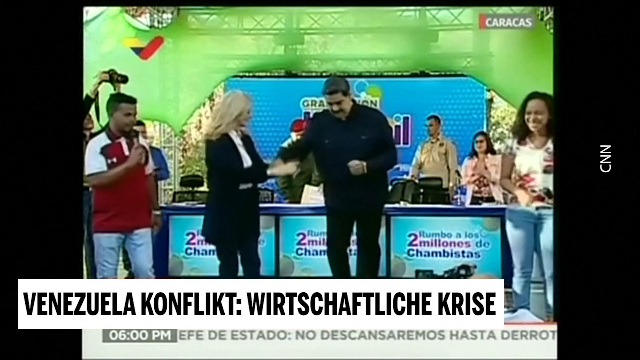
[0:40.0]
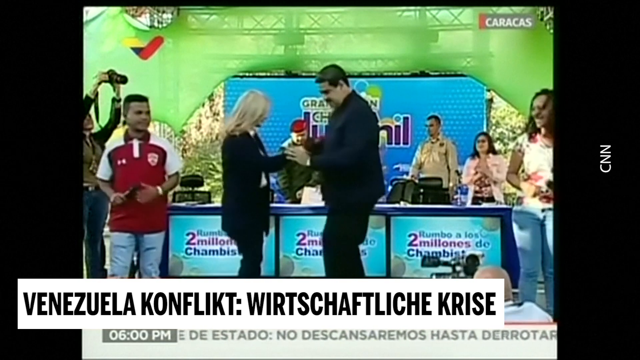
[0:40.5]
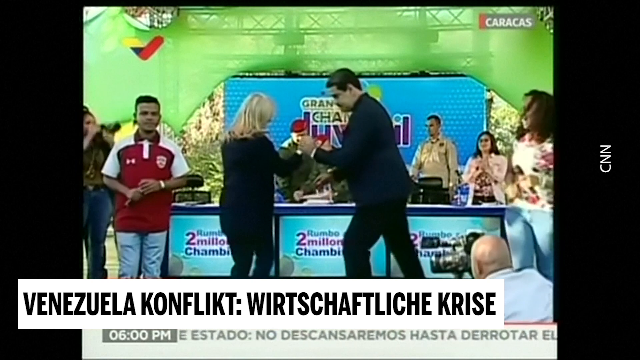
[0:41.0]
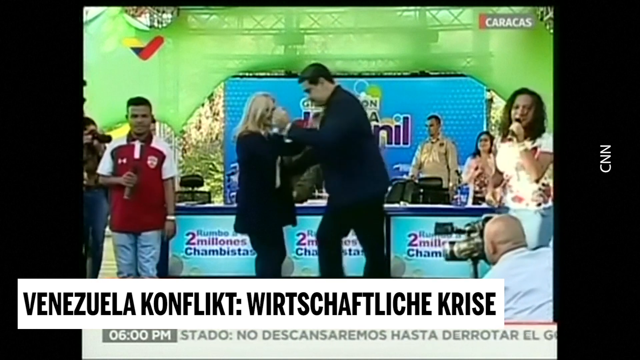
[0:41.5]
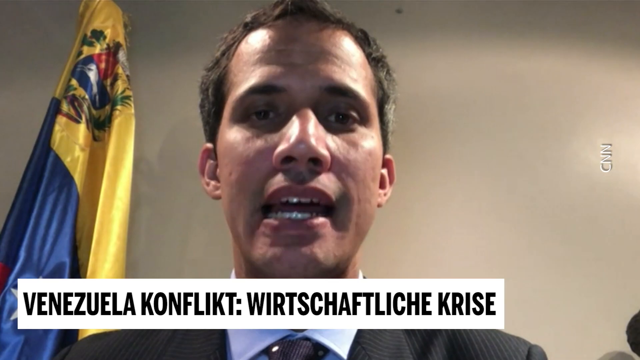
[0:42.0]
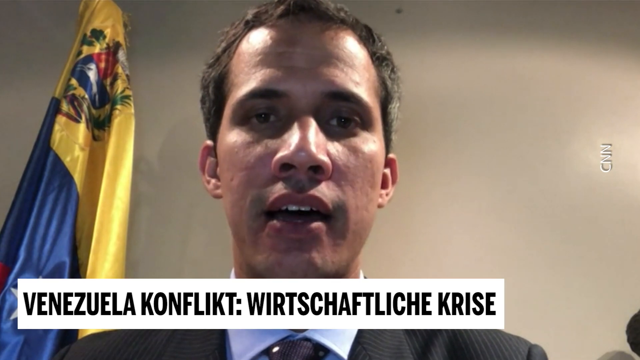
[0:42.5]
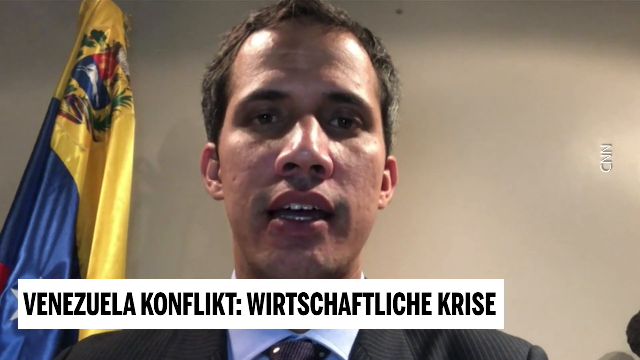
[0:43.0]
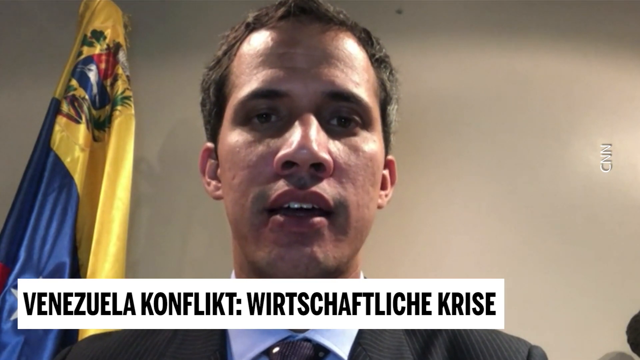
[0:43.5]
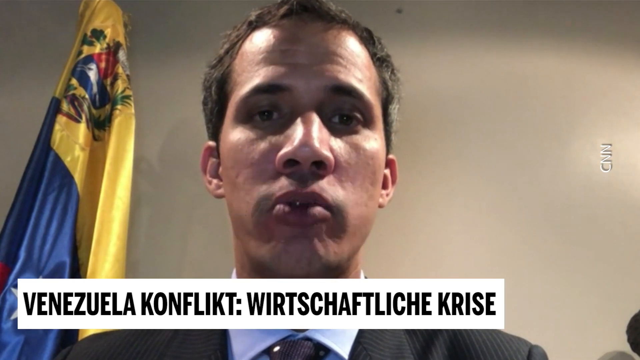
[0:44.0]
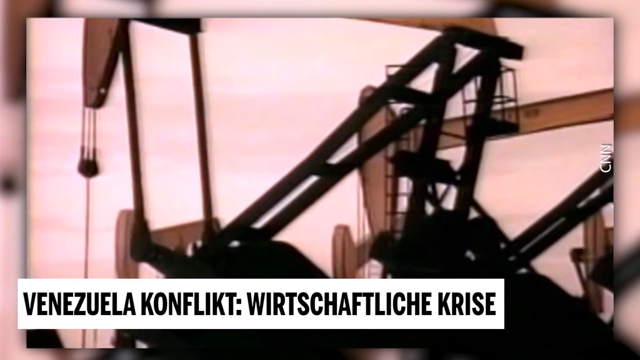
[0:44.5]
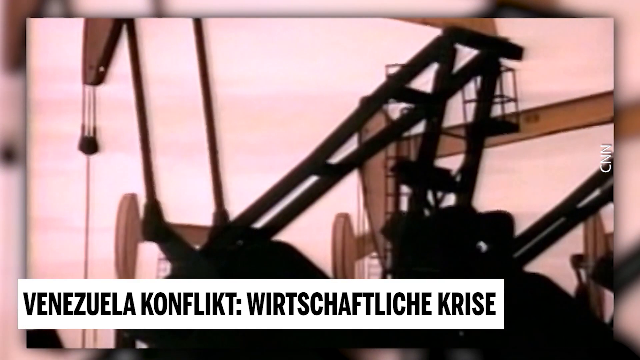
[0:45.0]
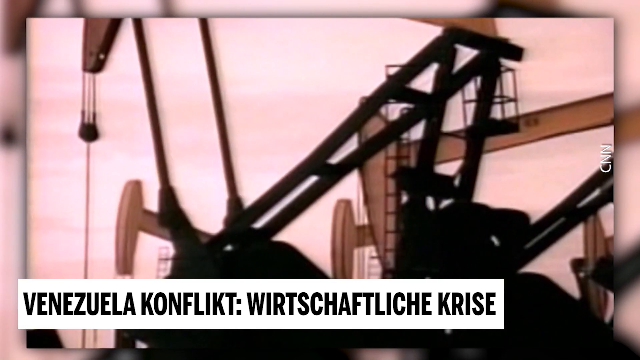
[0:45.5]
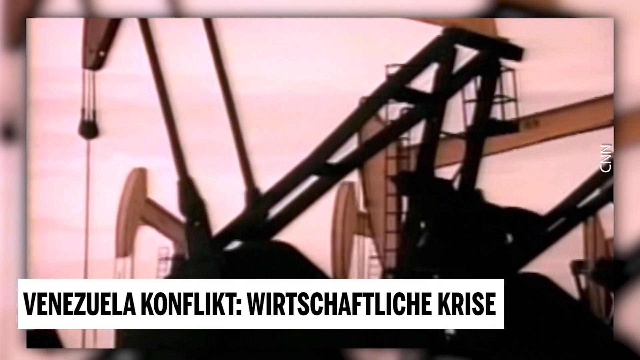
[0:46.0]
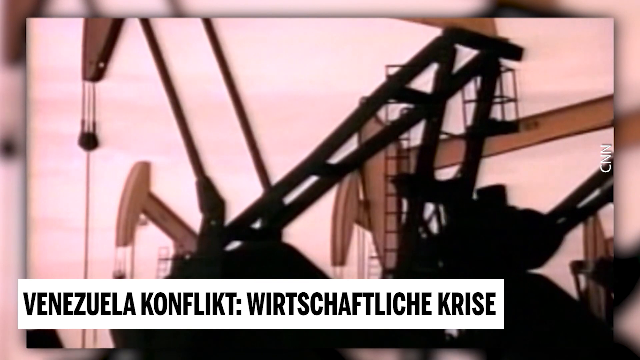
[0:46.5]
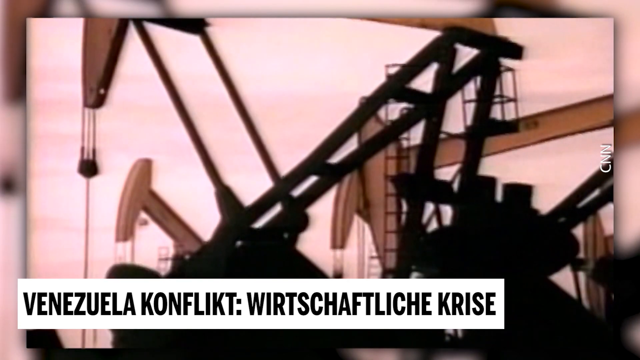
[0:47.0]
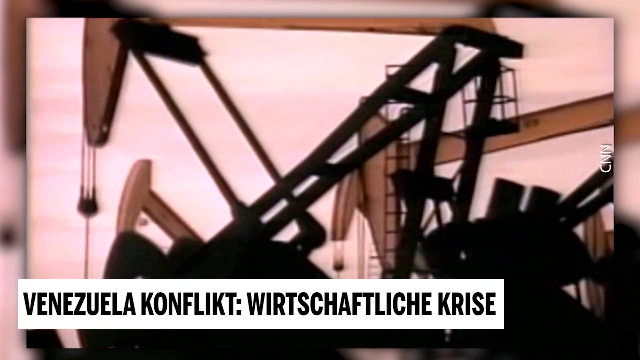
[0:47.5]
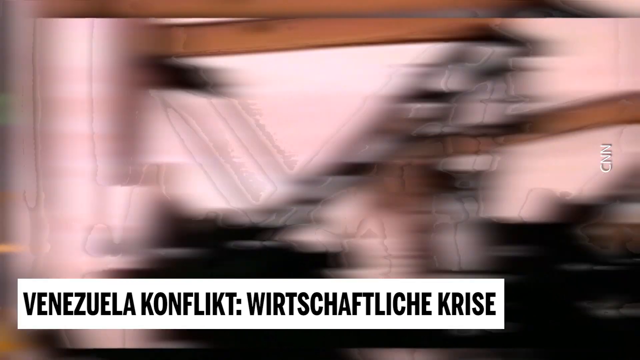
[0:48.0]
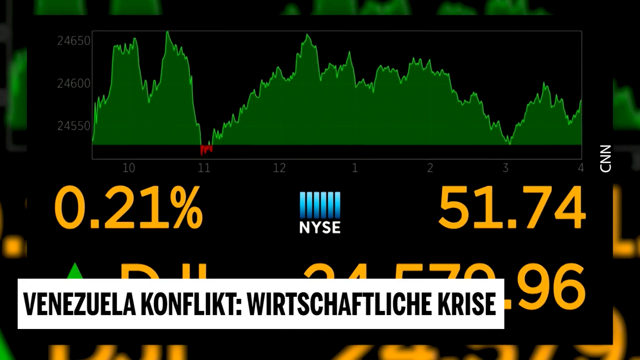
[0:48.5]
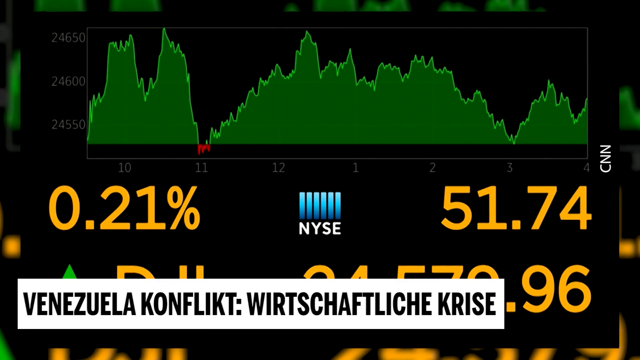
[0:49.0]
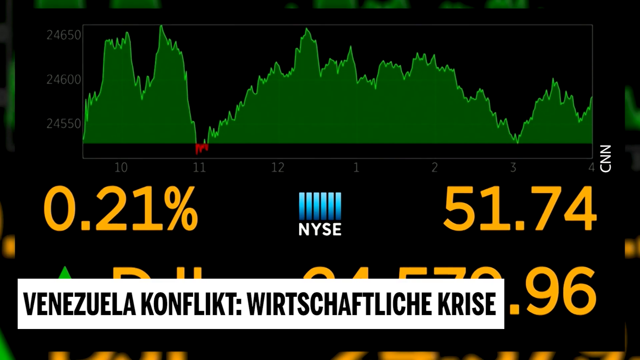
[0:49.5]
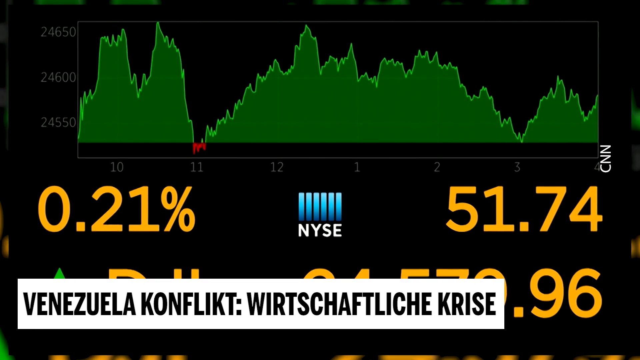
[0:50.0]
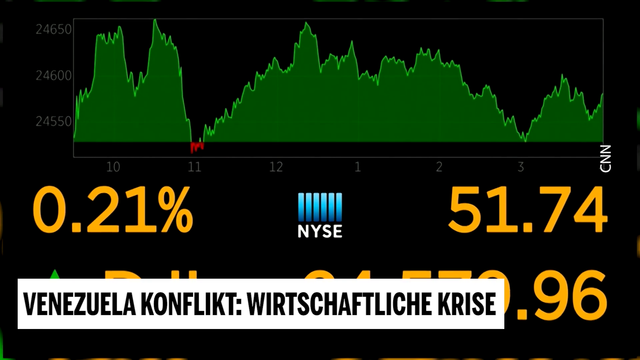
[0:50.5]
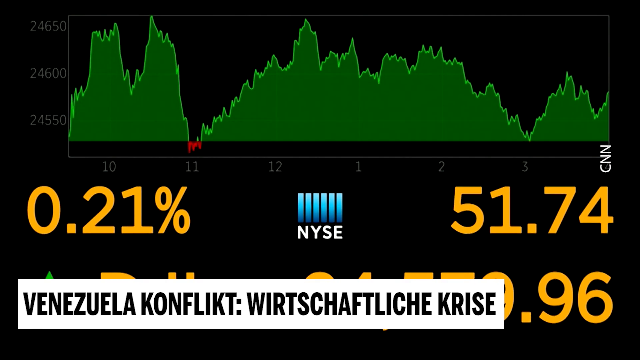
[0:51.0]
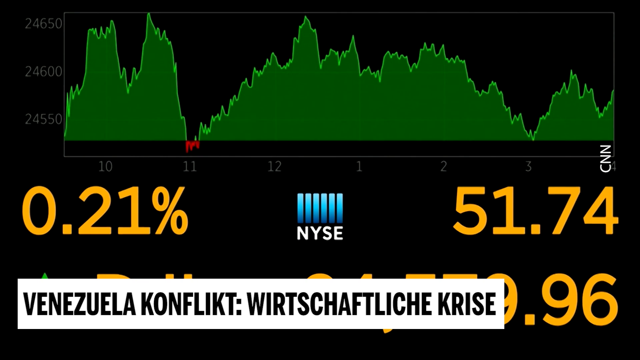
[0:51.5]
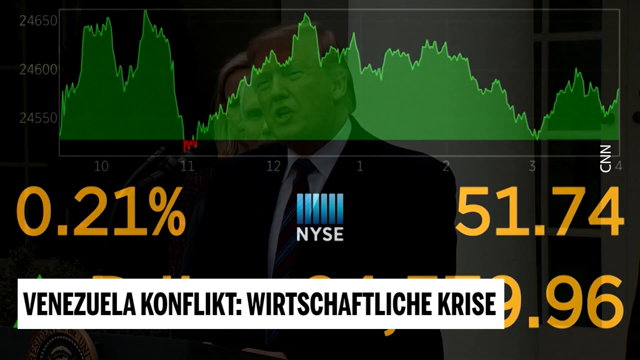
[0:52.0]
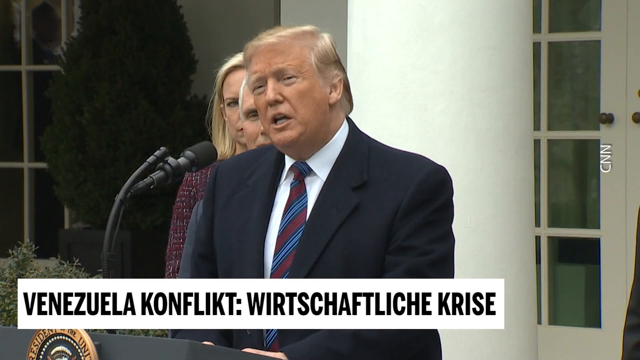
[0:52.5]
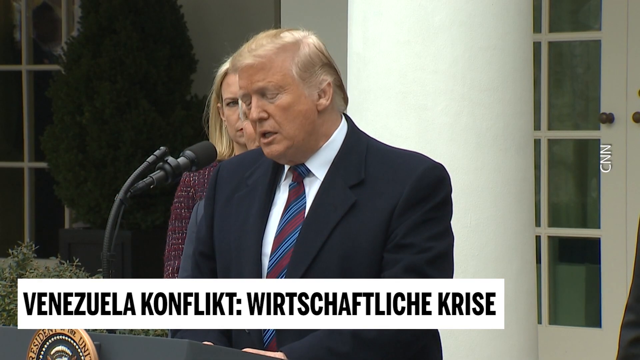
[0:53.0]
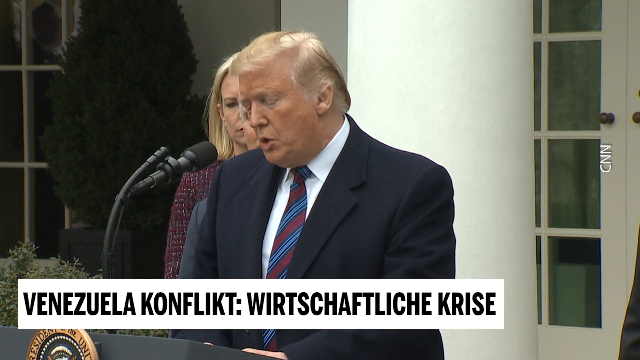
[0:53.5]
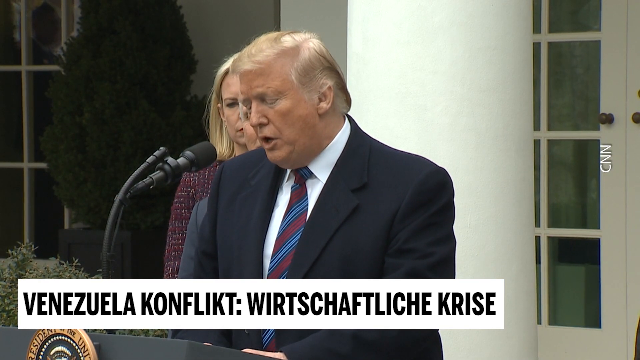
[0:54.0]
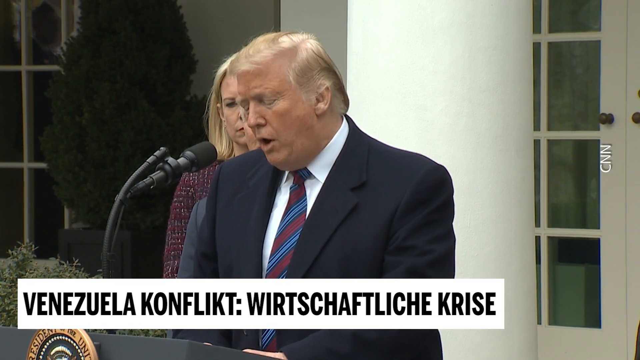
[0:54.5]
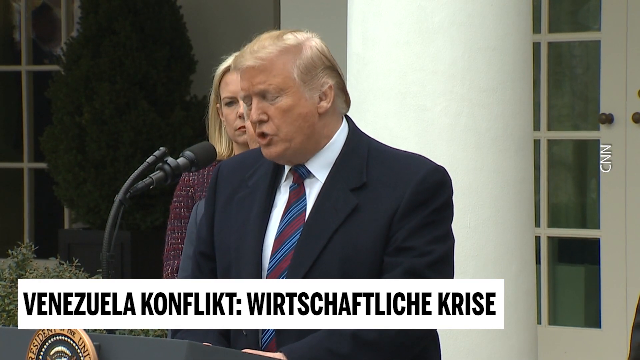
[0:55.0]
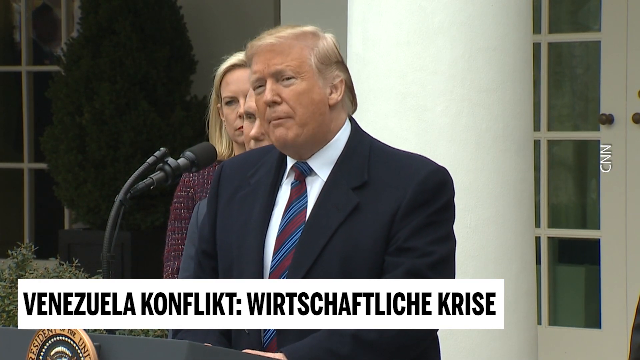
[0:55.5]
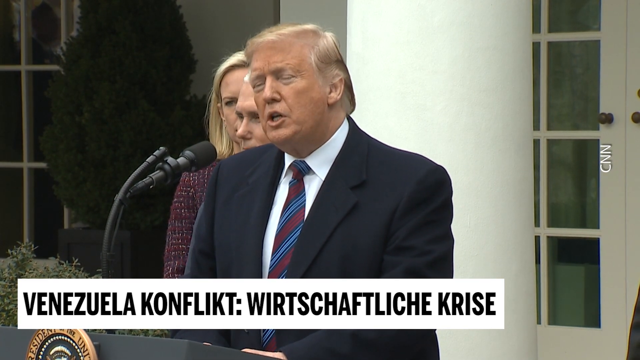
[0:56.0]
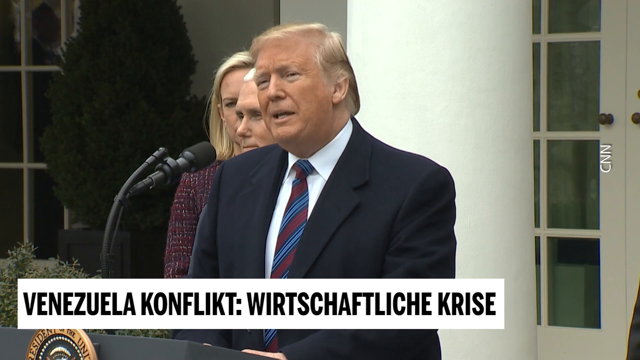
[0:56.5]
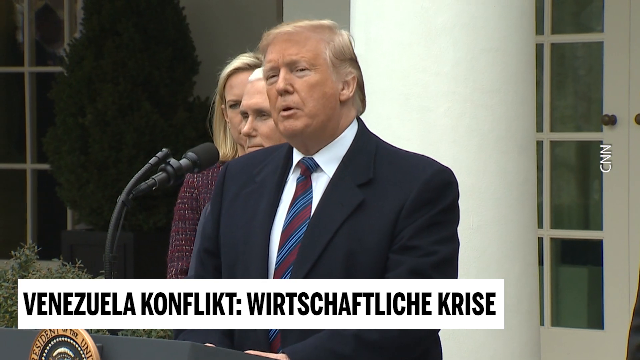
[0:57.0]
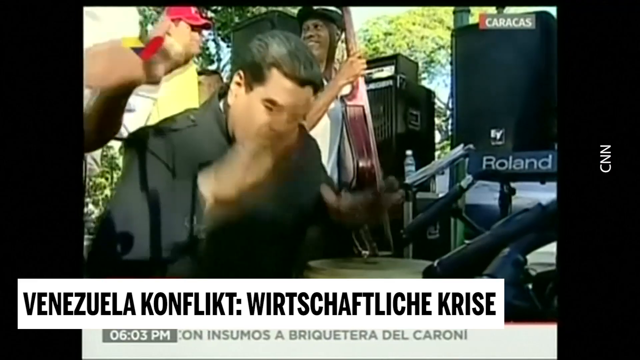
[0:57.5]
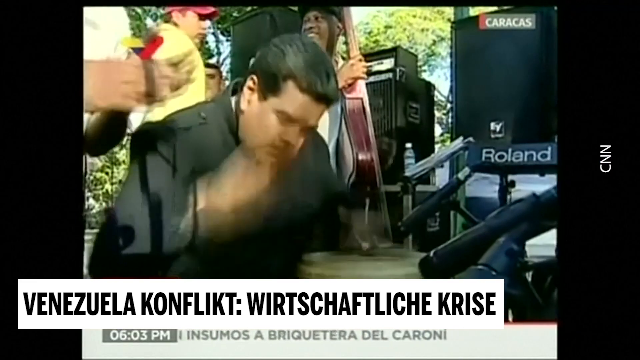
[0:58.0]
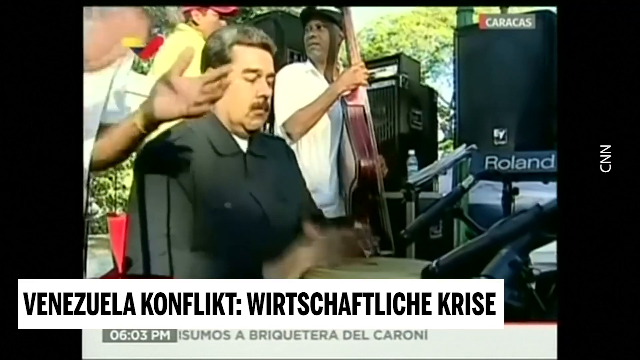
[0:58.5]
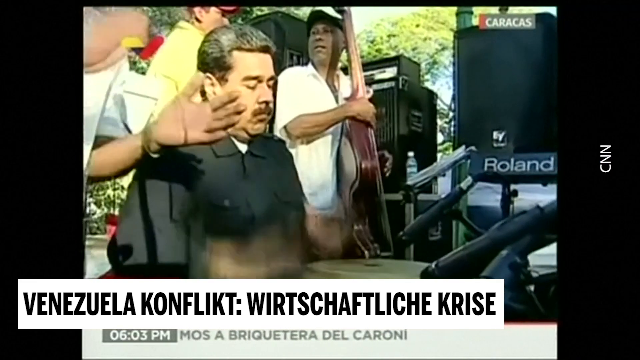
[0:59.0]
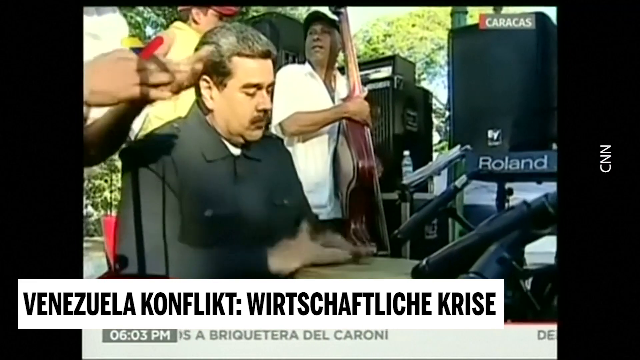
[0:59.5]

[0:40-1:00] What looks like President Maduro of Venezuela dances with a woman while other people around watch, looking happy and smiling. The video switches back to the young man in his twenties wearing a suit, being interviewed or looking at the camera. Footage that seemingly represents the industrialization of Venezuela follows, showing cranes and heavy machinery moving drums. Next, a graph in green shows 0.1% in yellow on the left side and 51.7% on the right side, with "NYSE" written at the center. President Donald Trump is then shown as though giving a press conference outside the White House, wearing a blue blazer and pants, with Vice President Mike Pence and what looks like a woman. Then President Maduro plays a drum in an outdoor environment, with people beside him.